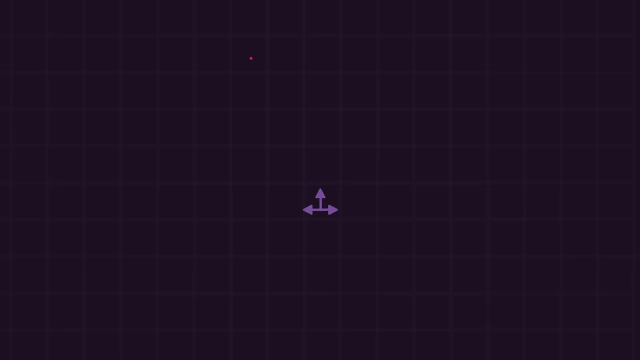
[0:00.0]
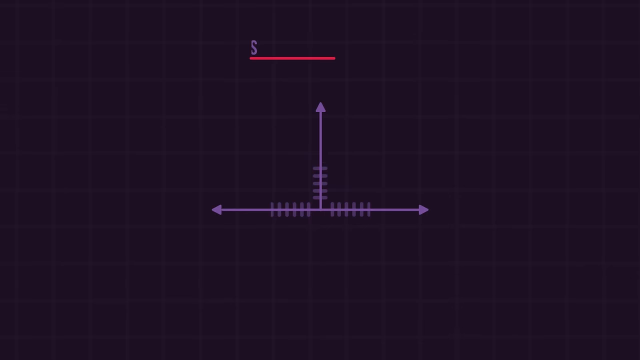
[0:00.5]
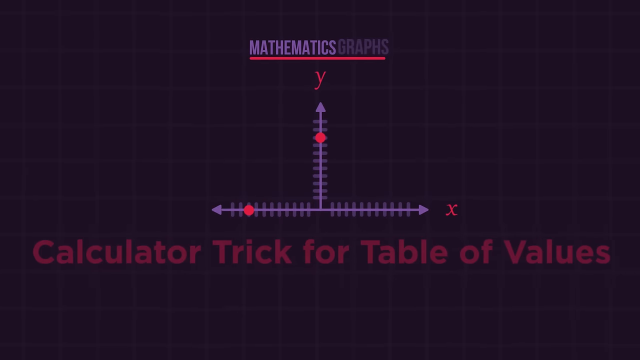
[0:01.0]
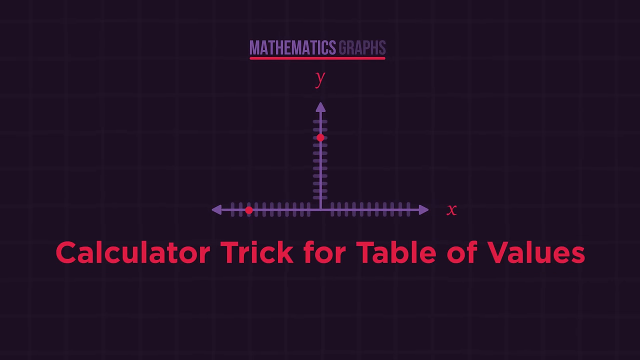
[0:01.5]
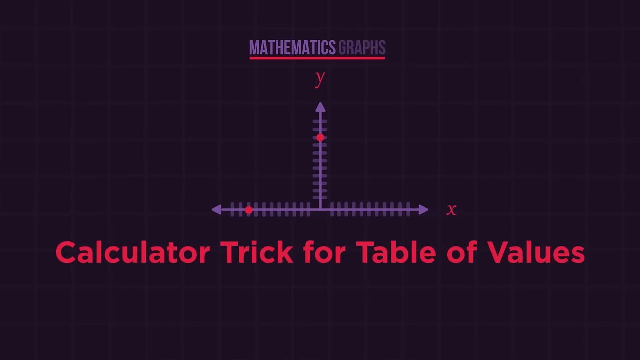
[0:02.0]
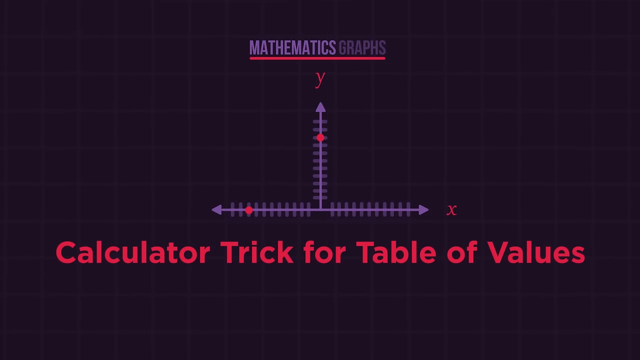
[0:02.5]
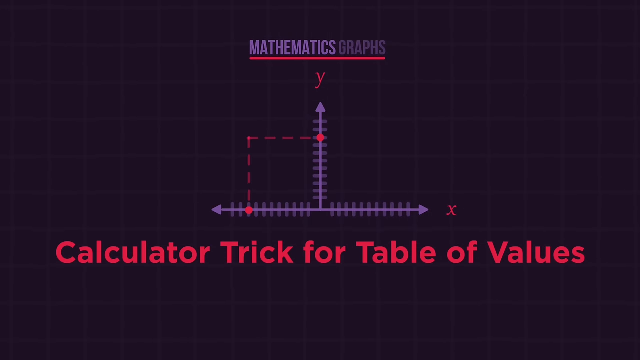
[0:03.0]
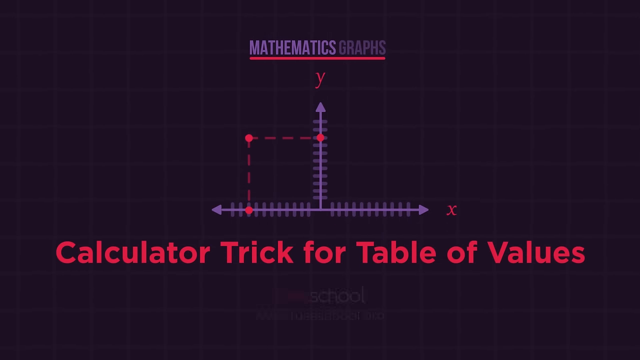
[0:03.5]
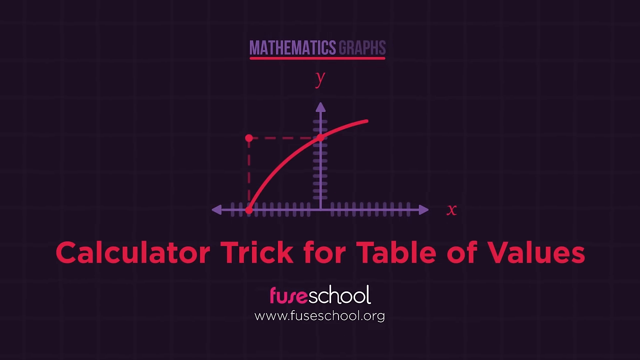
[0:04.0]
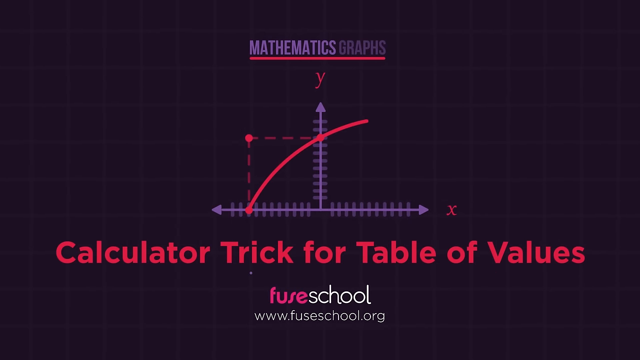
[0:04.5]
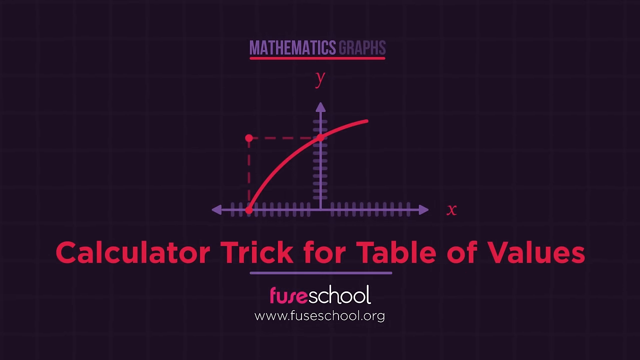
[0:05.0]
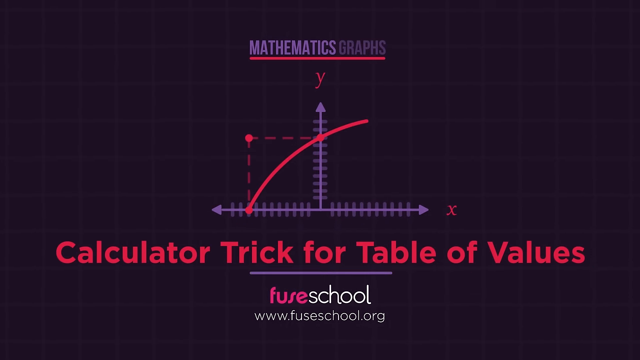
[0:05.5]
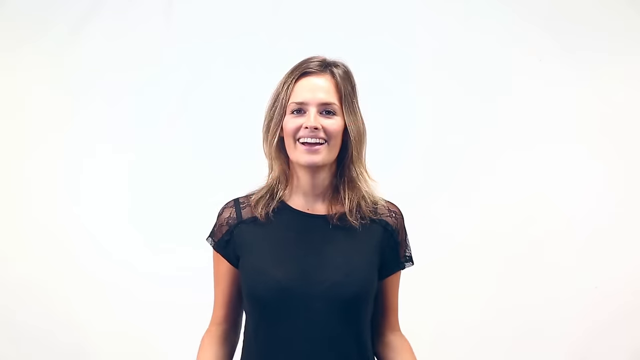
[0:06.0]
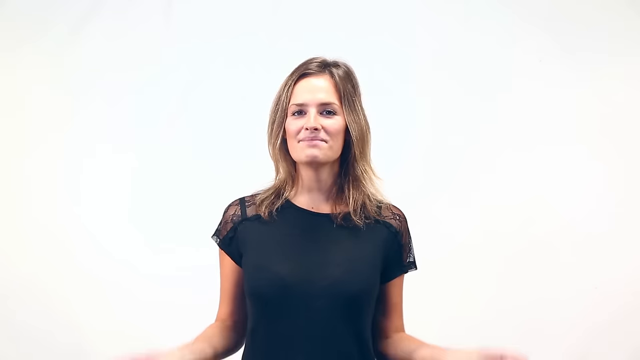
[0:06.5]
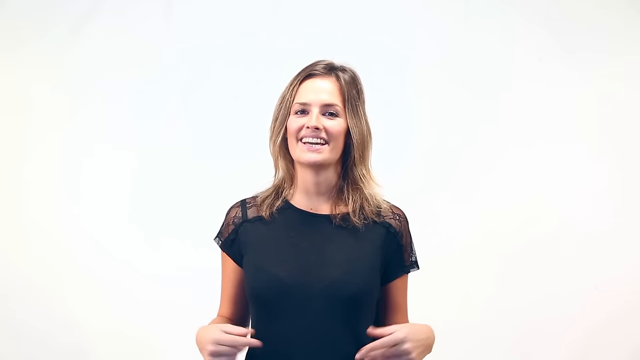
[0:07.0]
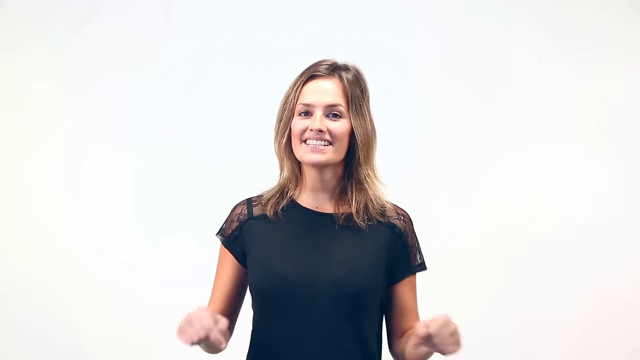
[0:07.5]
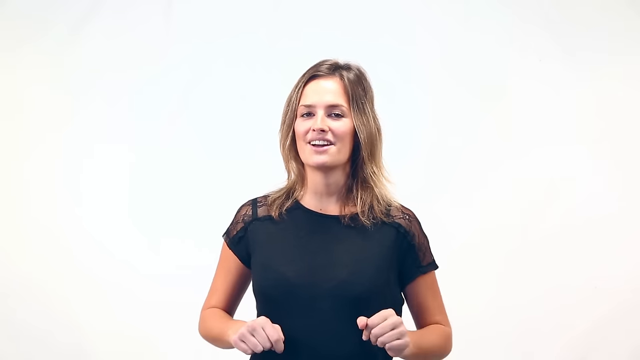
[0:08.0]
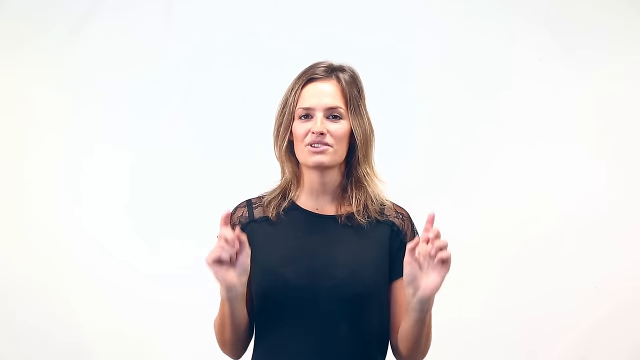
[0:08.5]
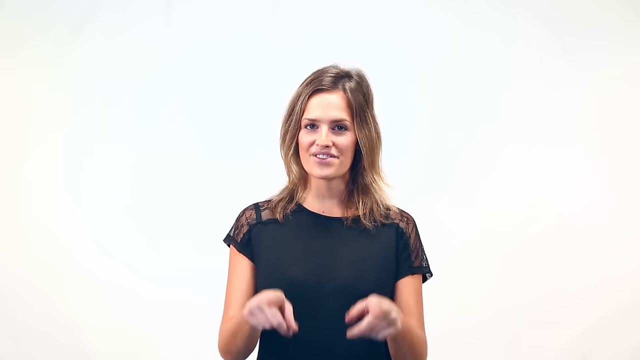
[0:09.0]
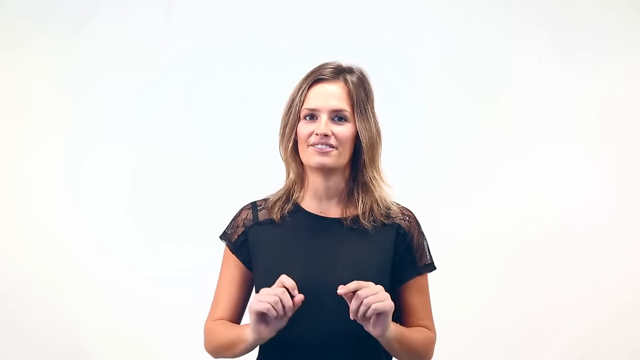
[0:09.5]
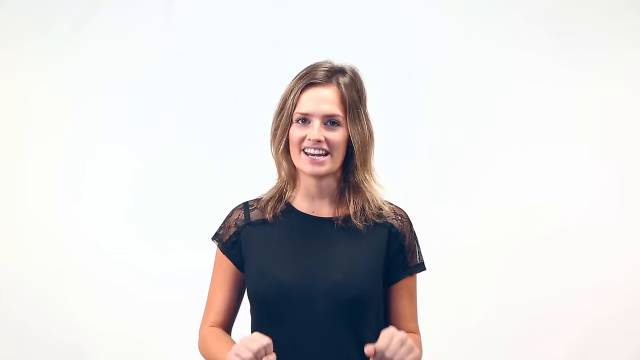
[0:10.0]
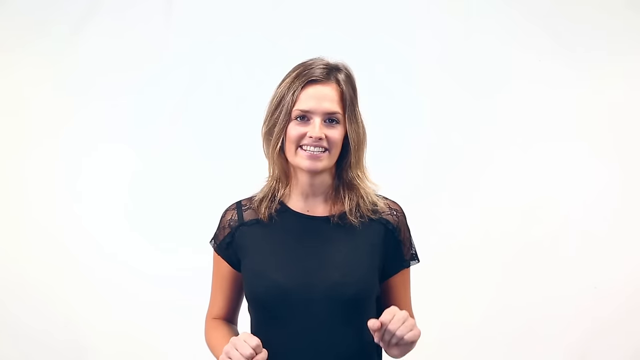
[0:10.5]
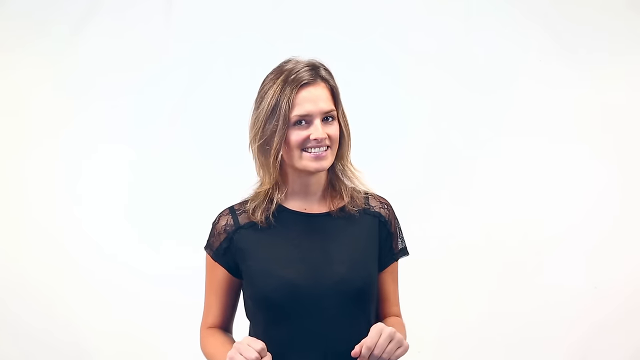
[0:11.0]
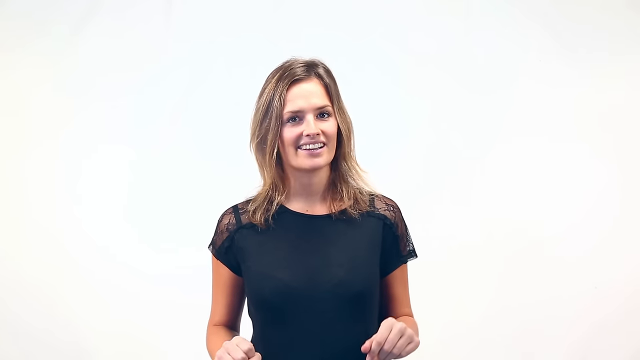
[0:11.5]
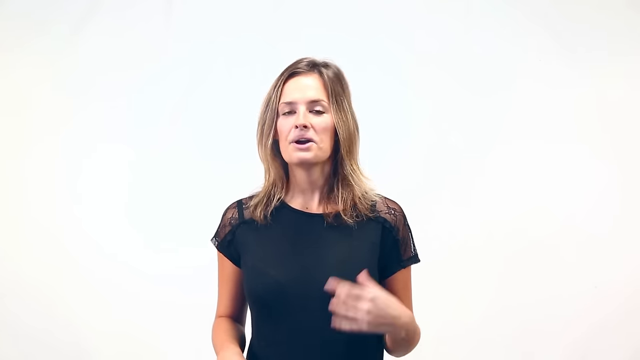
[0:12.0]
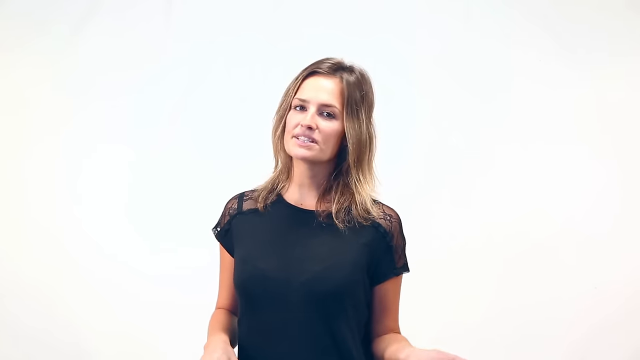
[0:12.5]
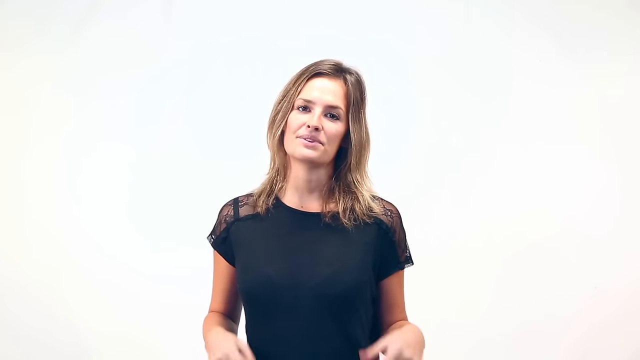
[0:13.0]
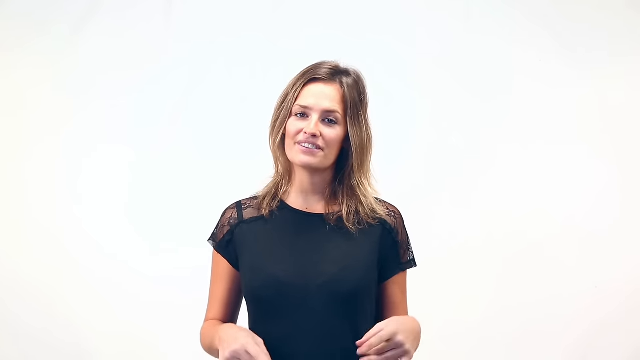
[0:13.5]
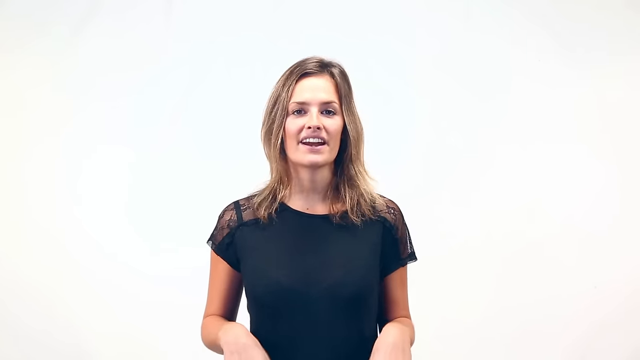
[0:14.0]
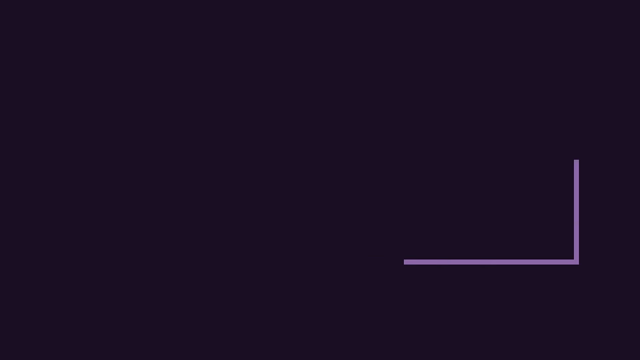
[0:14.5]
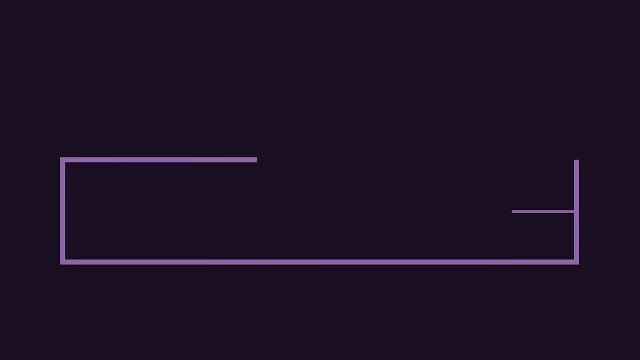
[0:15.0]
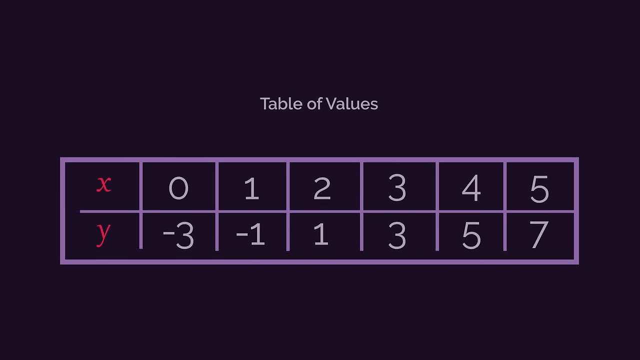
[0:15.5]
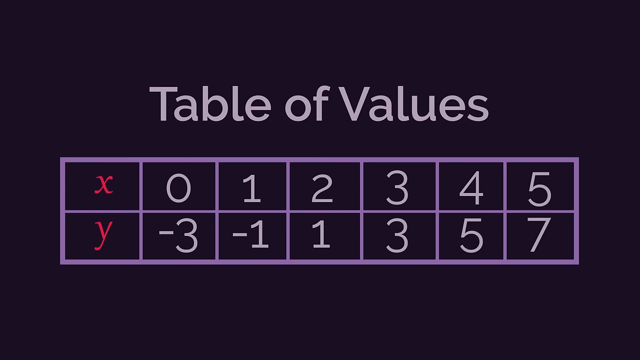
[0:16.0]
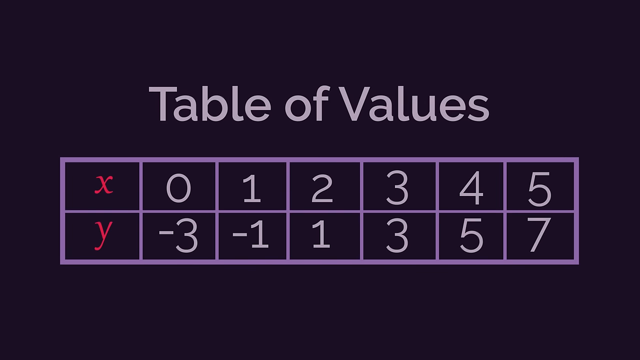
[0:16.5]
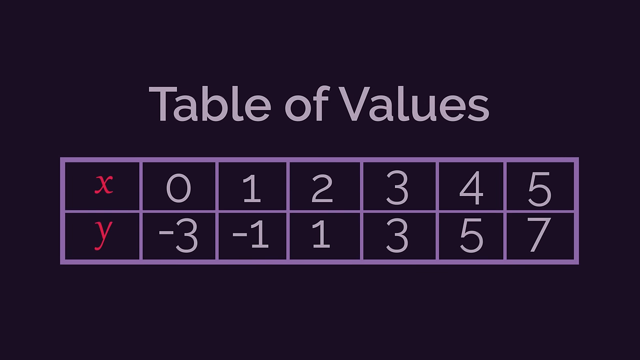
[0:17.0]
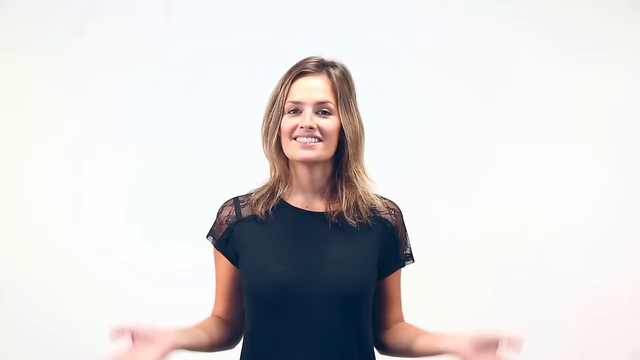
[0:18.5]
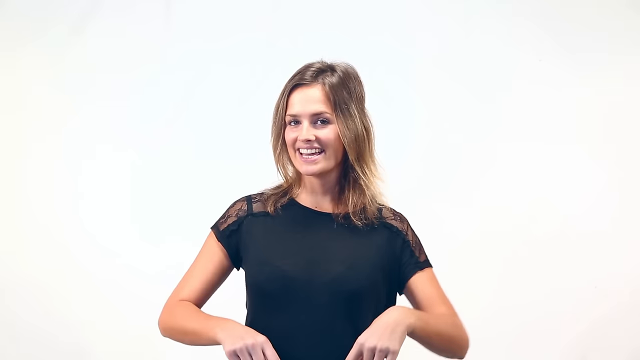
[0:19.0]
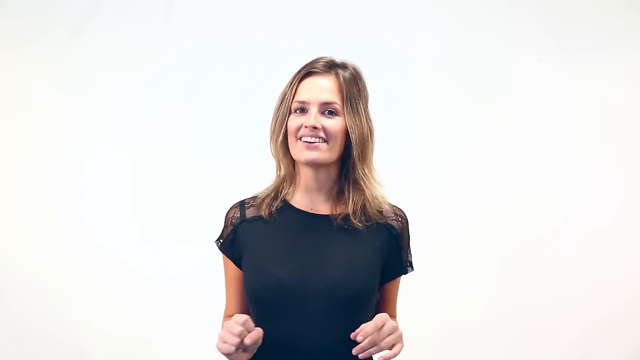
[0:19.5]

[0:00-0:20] The video begins on a black screen showing a purple line graph with two red points on it, one along the x-axis and the other along the y-axis. A logo appears over it that says "Mathematics Graphs," and a caption appears underneath the graph reading "Calculator Trick for Table of Values." A second point is drawn between the two points on the graph, where the two points would intersect if they were lines. These points are connected with dotted lines, and then a solid red curved line is drawn up between the two points and continues extending past them upward. Below the slogan, a logo for Fuse School appears, with the word "Fuse" written in pink and the word "School" in white, and under that is the web address "Fuseschool.org." The video then cuts to a woman with long brown hair wearing a black blouse. She stands in front of a featureless white background and speaks into the camera, smiling and moving her hands as she talks. Next comes a black screen titled "Table of Values," showing a table of values for a graph, with one row of values for x and the other for y. The columns give the coordinates x 0 and y -3, x 1 and y -1, x 2 and y 1, x 3 and y 3, x 4 and y 4, and x 5 and y 7.